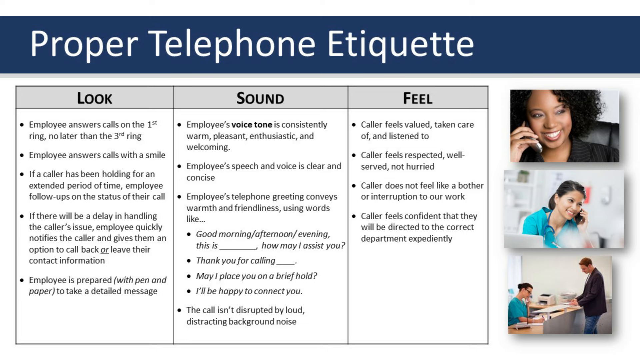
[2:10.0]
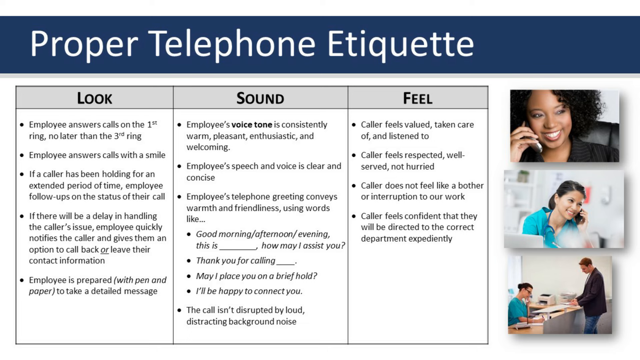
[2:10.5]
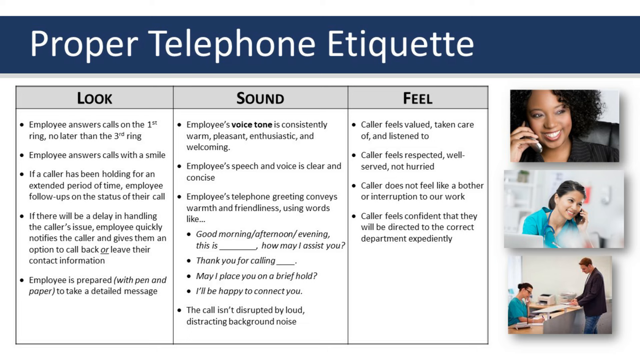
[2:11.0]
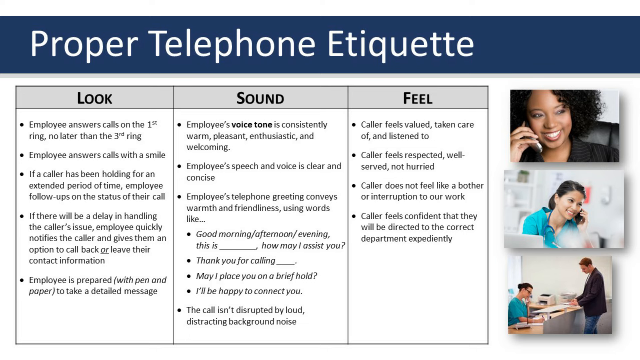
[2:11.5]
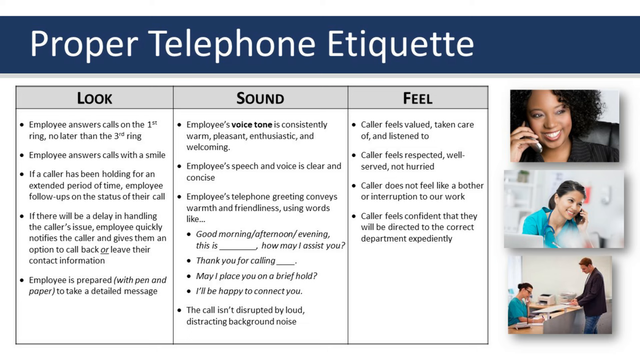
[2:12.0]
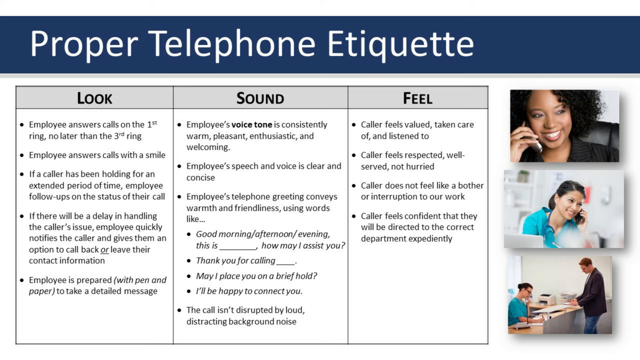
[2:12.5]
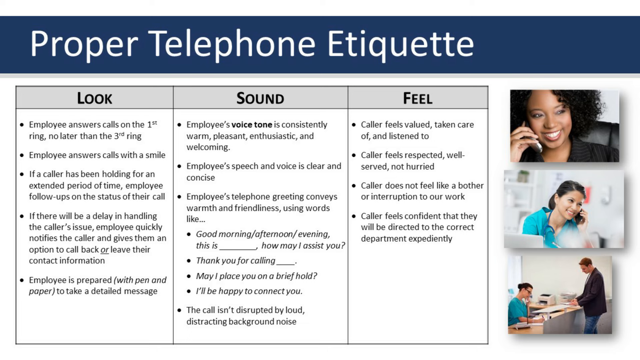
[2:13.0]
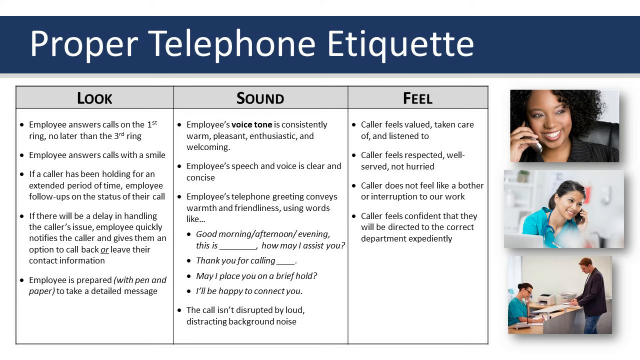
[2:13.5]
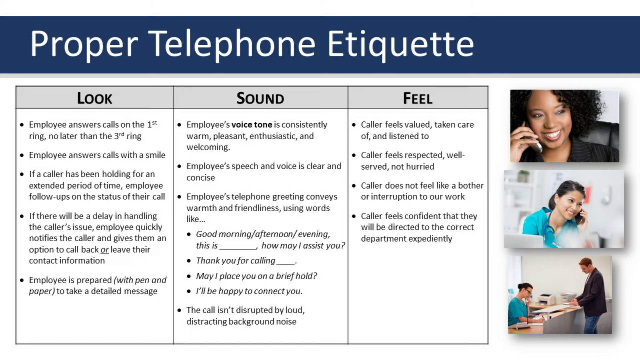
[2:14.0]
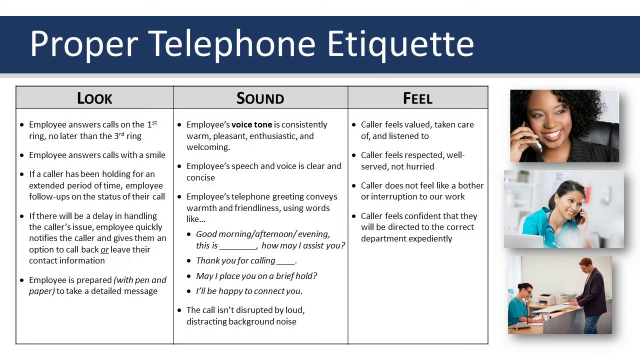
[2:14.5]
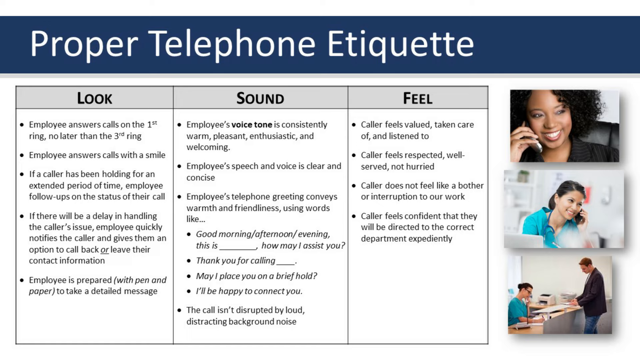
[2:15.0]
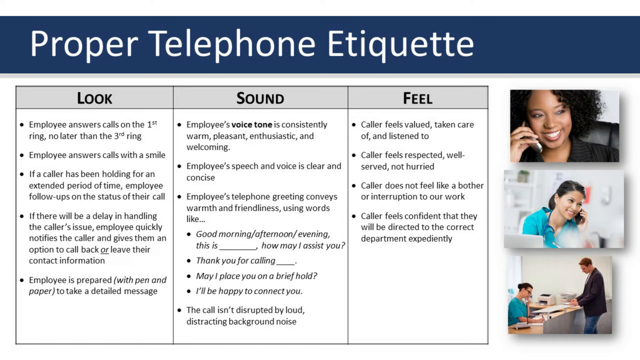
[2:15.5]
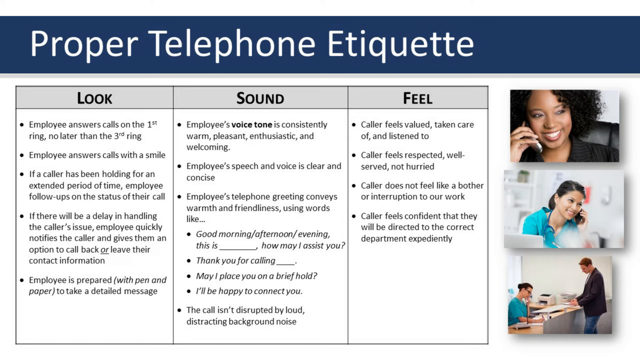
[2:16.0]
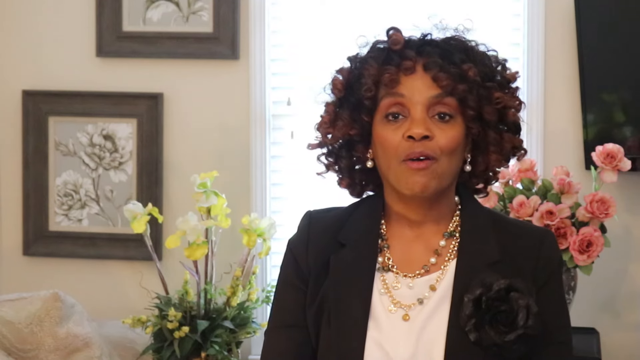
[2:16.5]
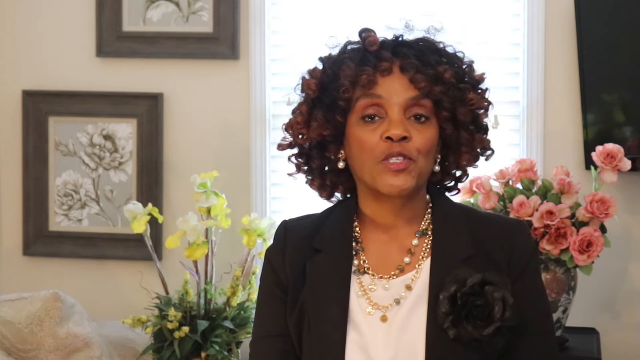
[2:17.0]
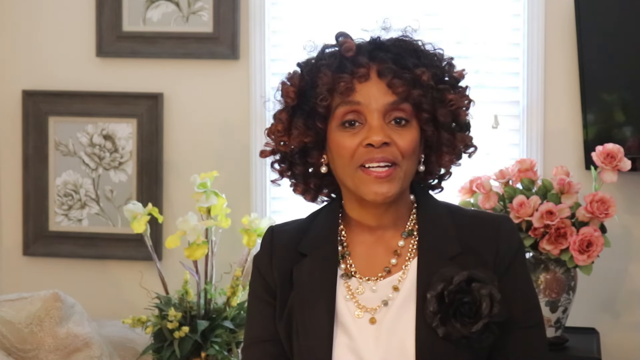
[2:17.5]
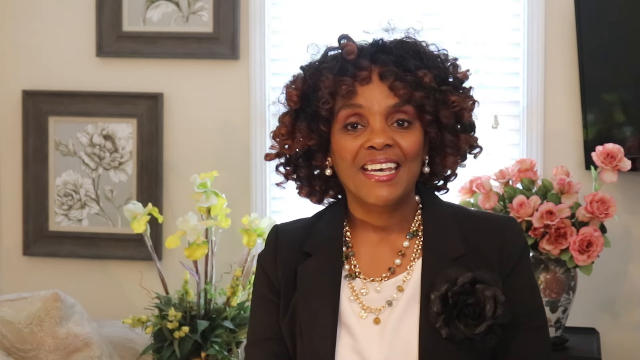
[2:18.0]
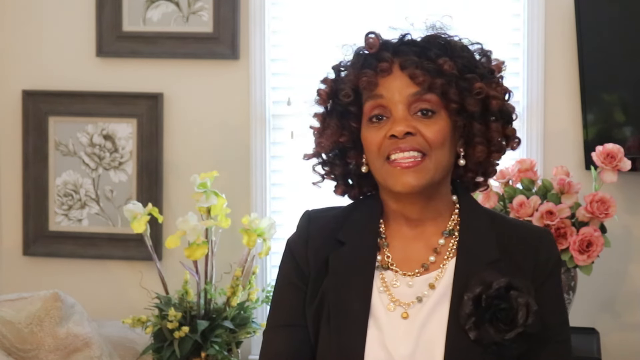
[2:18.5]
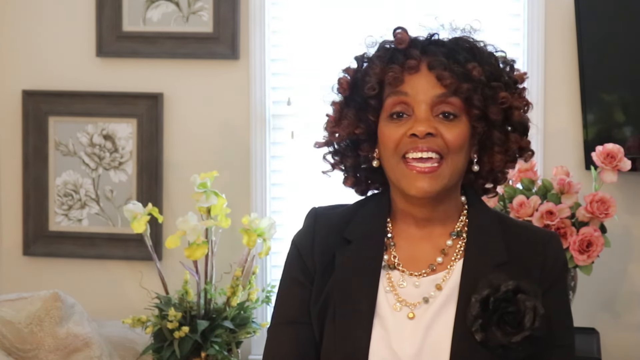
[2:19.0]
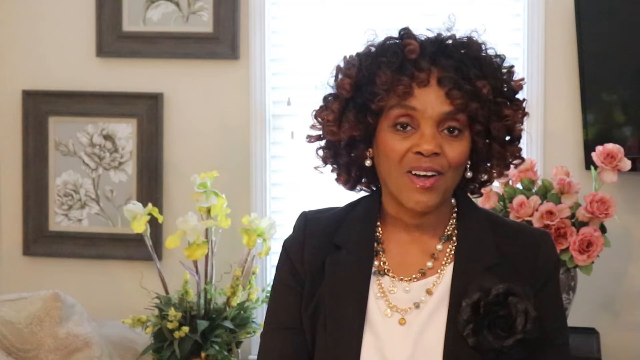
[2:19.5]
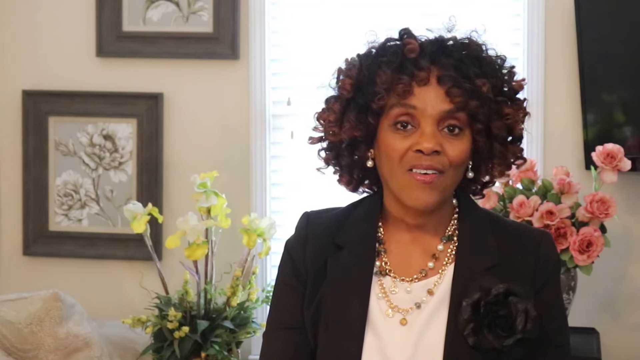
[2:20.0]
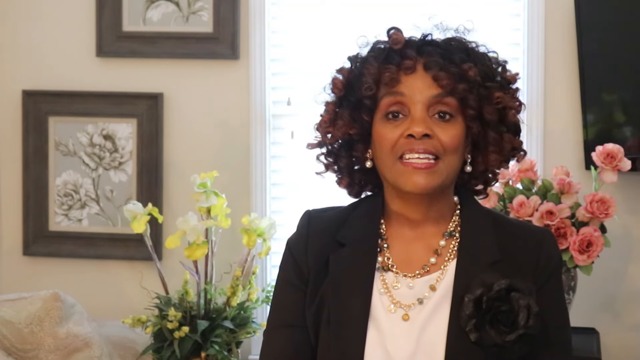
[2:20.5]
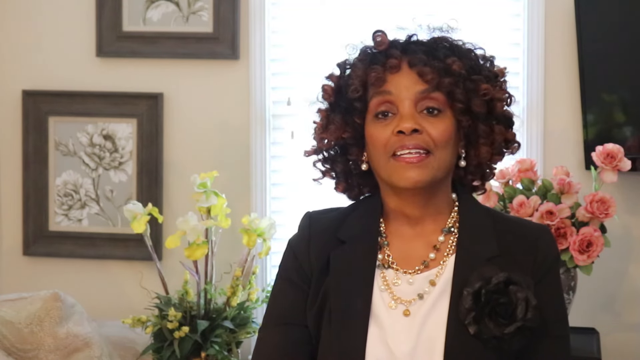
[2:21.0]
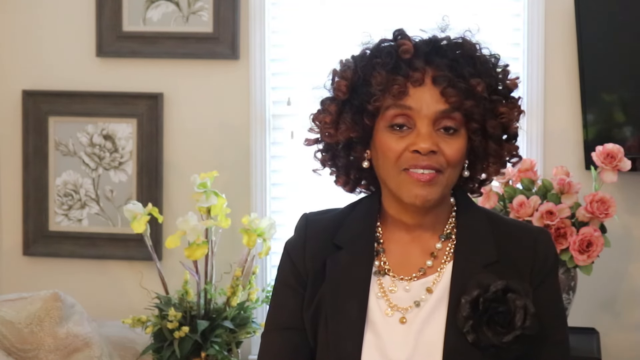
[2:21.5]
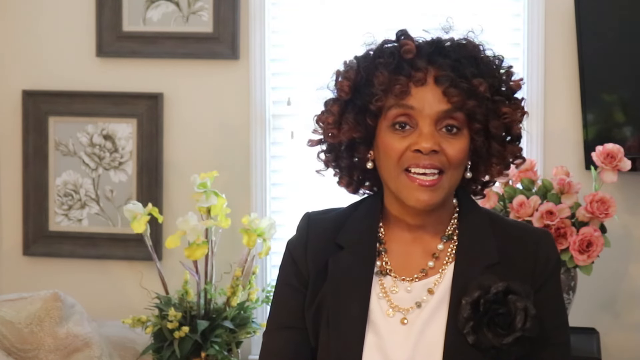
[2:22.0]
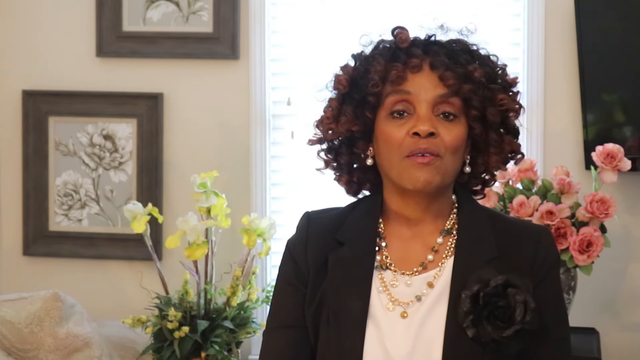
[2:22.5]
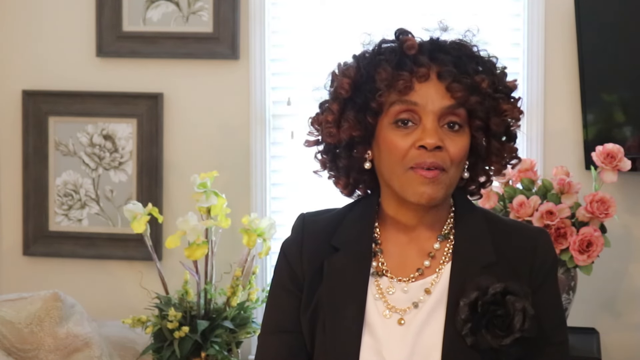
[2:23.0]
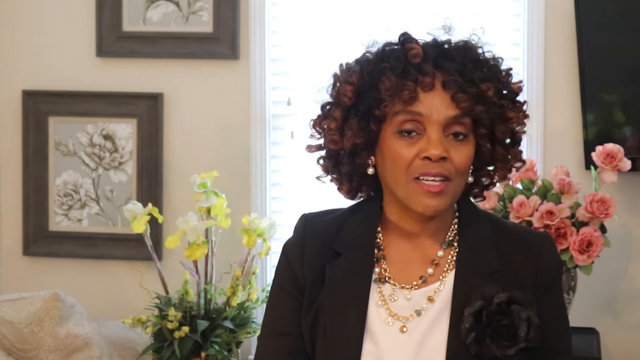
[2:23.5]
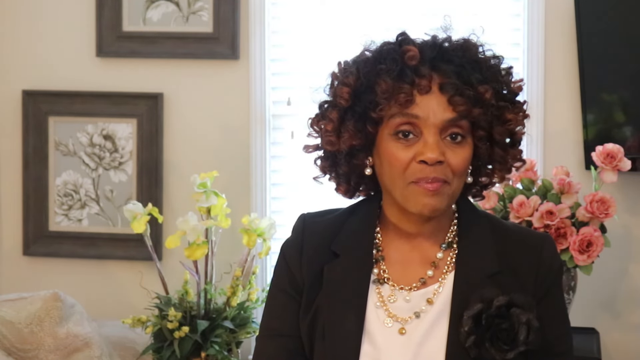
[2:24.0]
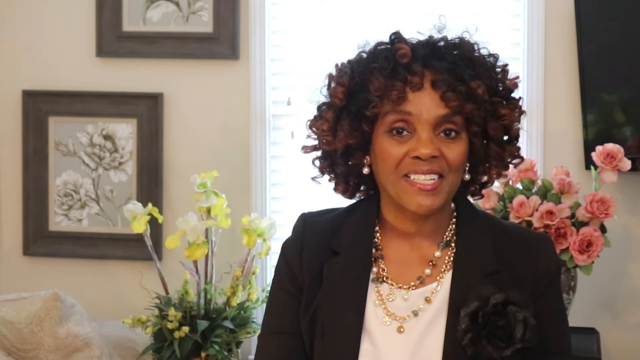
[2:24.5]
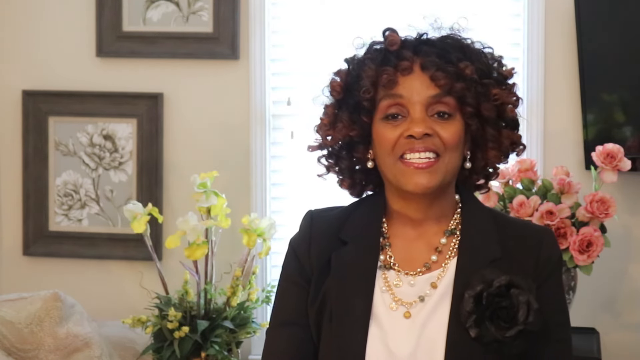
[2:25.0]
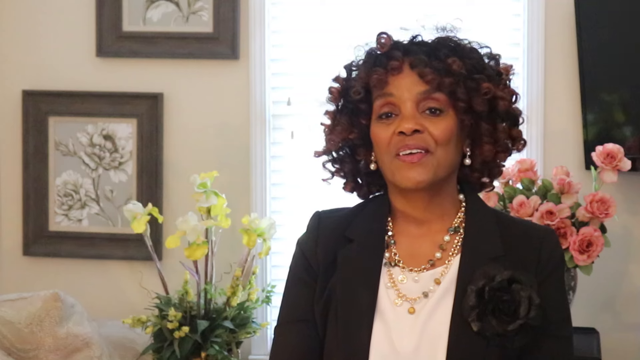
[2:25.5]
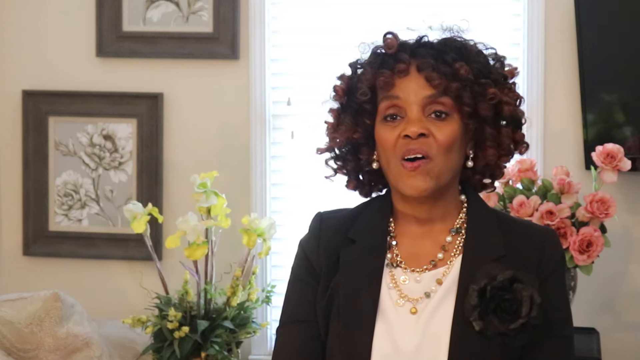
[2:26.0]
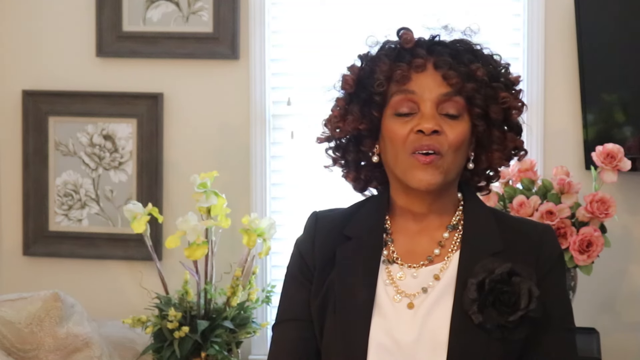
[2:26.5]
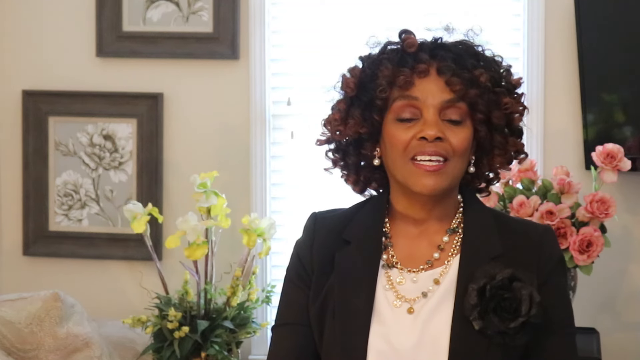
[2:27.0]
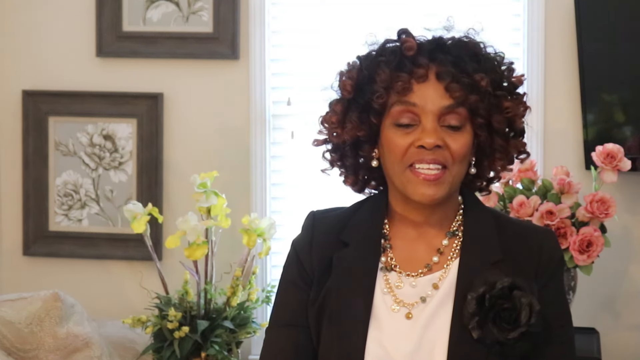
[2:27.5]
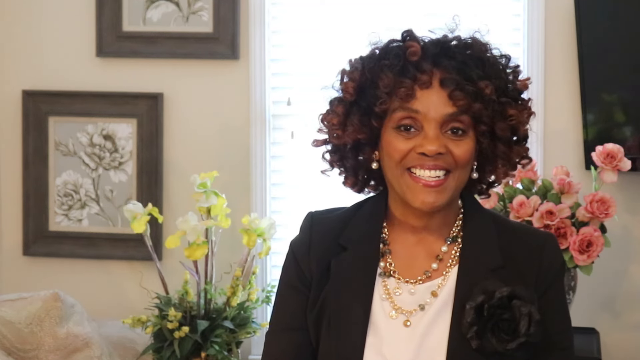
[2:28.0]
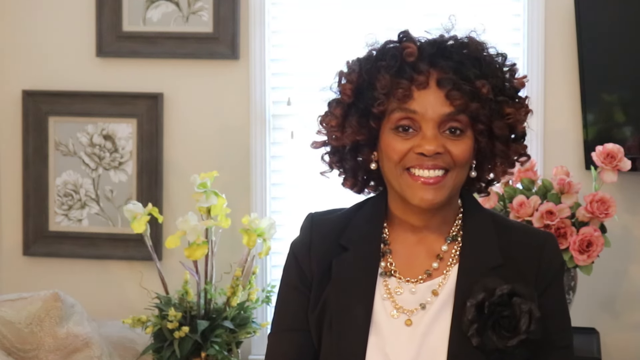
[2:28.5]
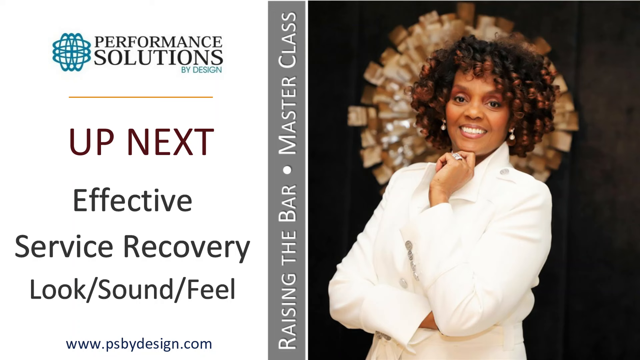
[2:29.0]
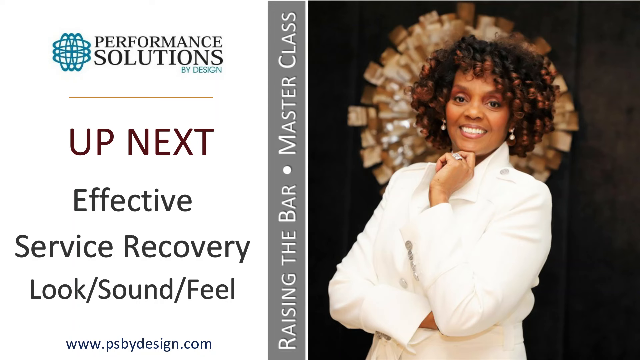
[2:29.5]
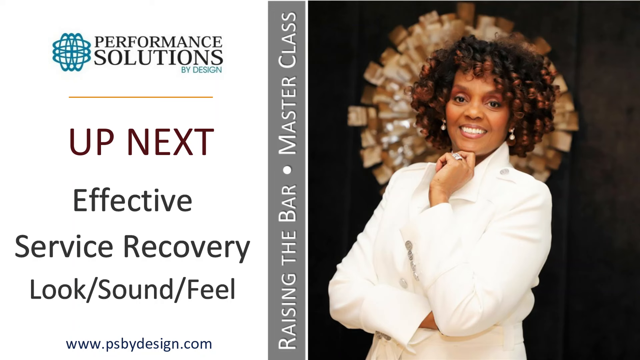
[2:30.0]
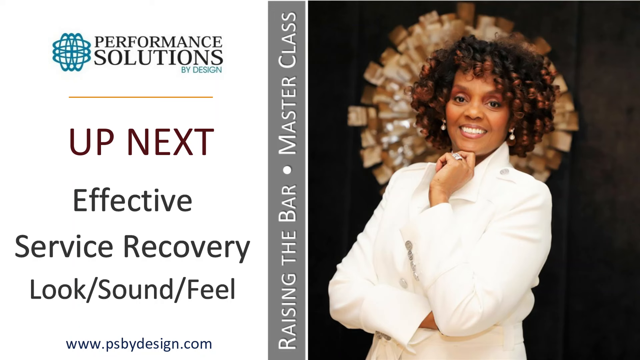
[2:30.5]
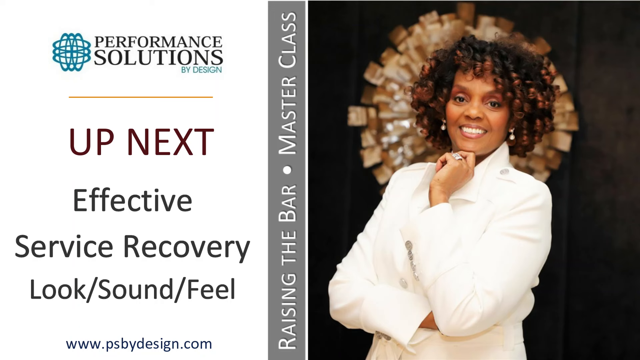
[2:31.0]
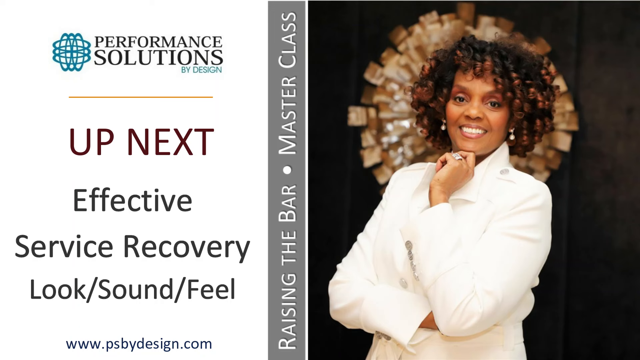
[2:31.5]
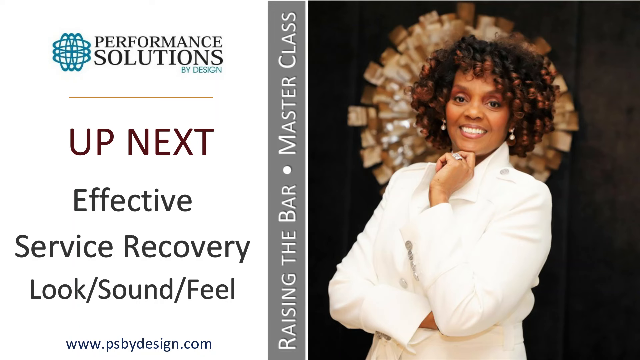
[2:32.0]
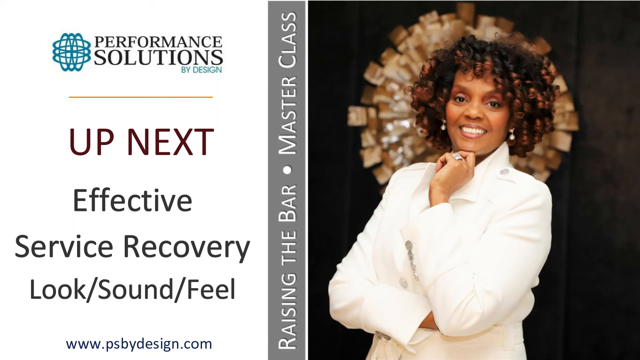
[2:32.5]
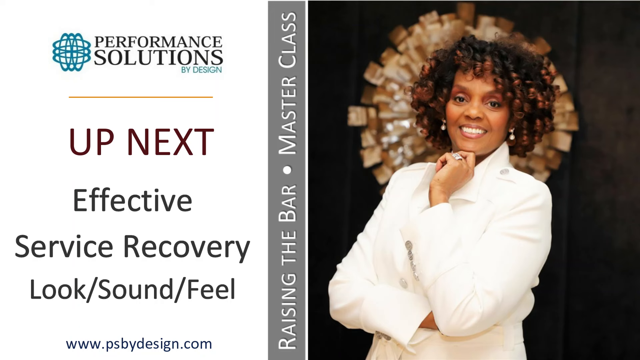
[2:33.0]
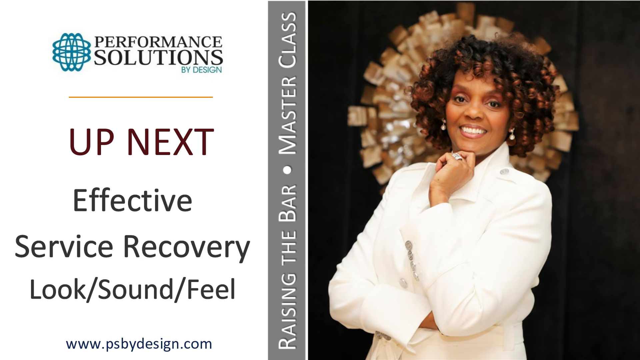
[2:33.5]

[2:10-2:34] The "proper telephone etiquette" page shows the look, sound and feel items: under look, employees answer calls on the first ring, no later than the third ring, and with a smile; if a caller has been holding for an extended period of time, the employee follows up on the status of their call; if there would be a delay, the employee quickly notifies the caller and gives them the option to call back; employees are prepared with pen and paper to take a detailed message. Under sound: "employees' voice tone is consistently warm, pleasant, enthusiastic, and welcoming," speech and voice are clear and concise, the greeting conveys warmth and friendliness using words like "good morning, afternoon, evening," with phrases including "Thank you for calling" and "I'll be happy to connect you," and "the call isn't disrupted by loud distracting background noise." Under feel: "Caller feels valued and taken care of and listened to," "Caller feels respected, well served," "Caller does not feel like a bother or interruption to our work," and "Caller feels confident that they would be directed to the correct department expediently."